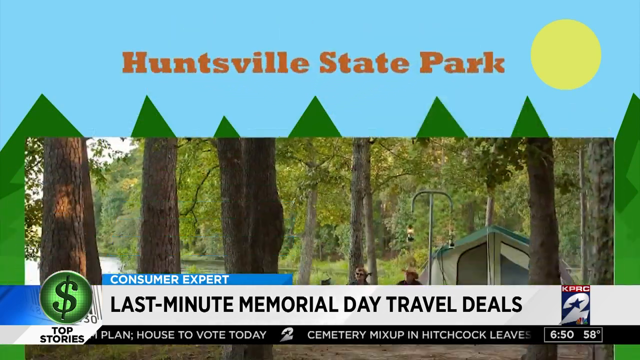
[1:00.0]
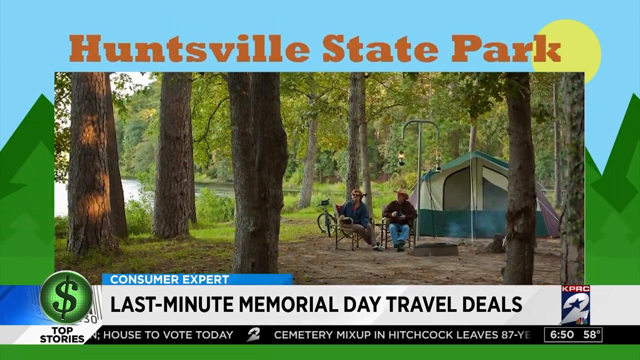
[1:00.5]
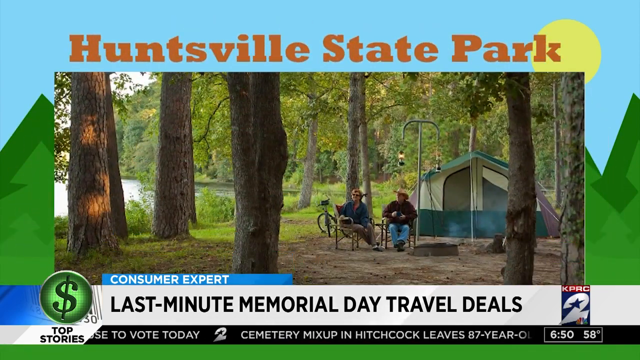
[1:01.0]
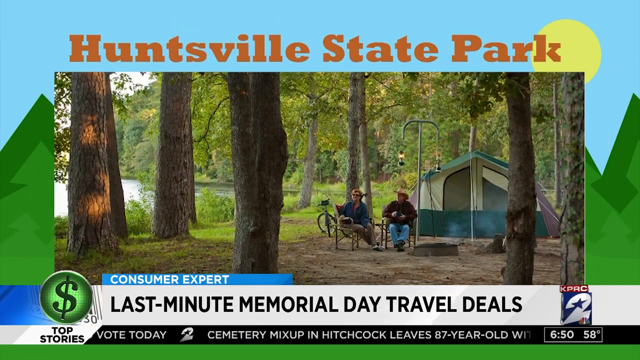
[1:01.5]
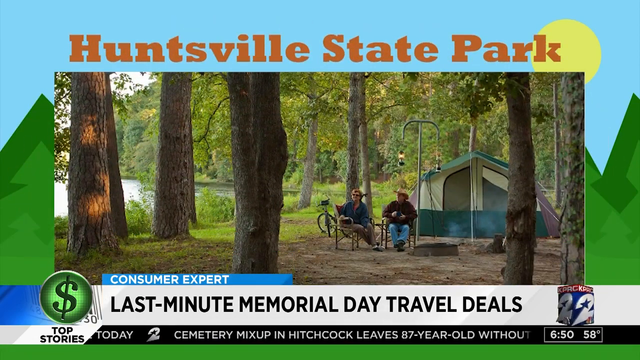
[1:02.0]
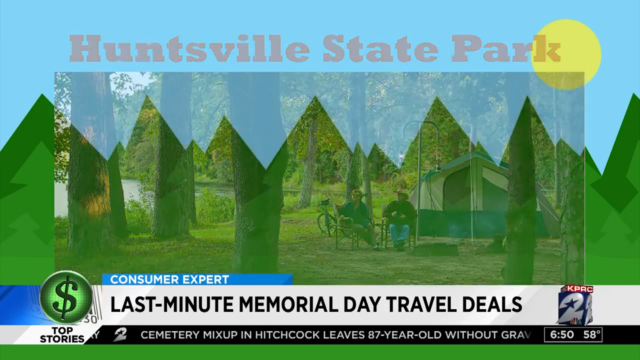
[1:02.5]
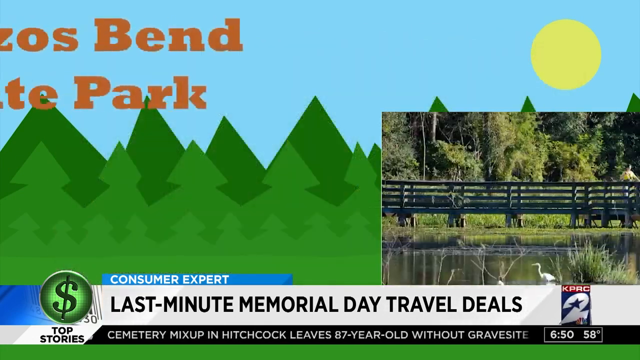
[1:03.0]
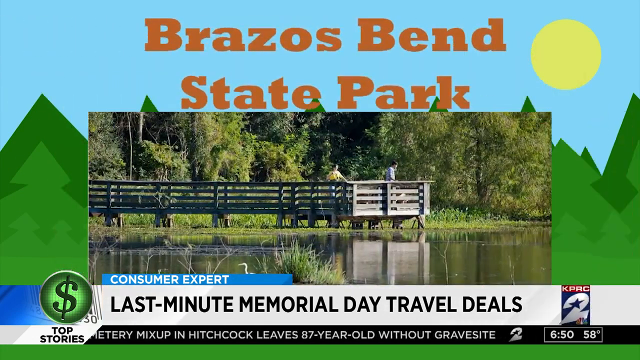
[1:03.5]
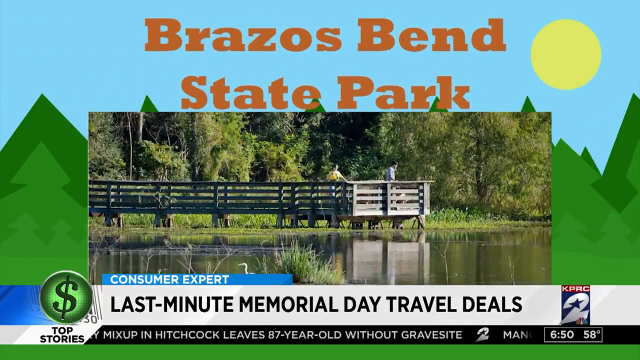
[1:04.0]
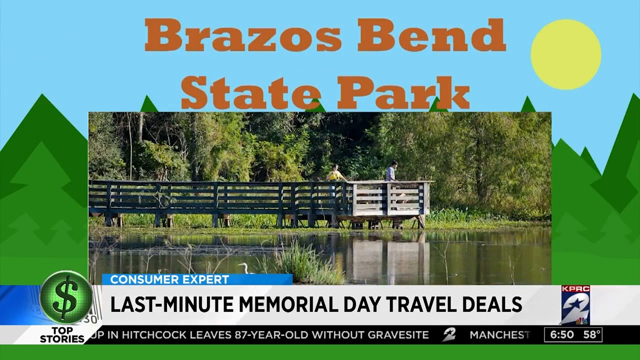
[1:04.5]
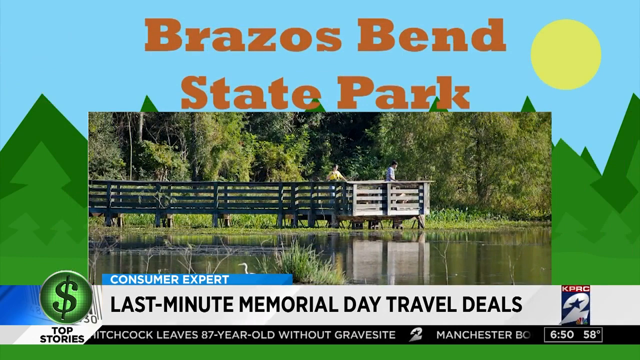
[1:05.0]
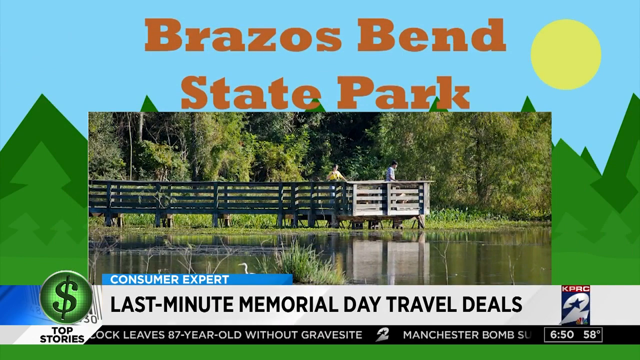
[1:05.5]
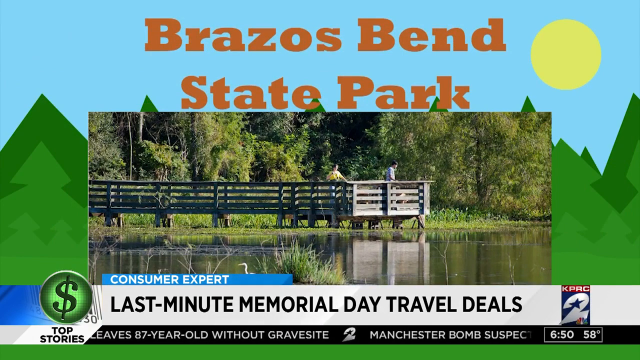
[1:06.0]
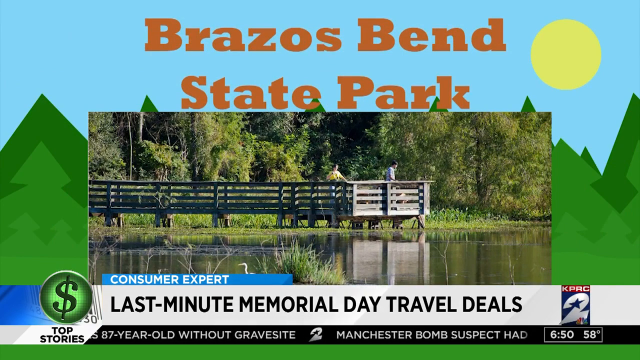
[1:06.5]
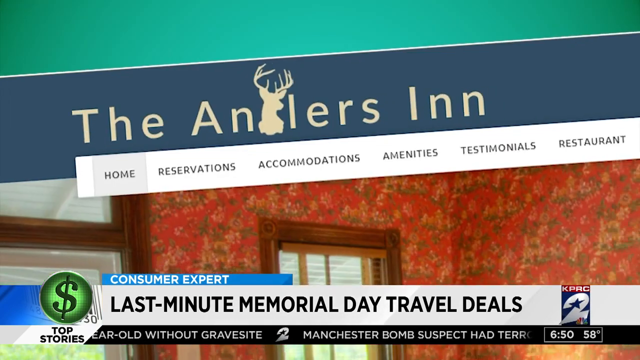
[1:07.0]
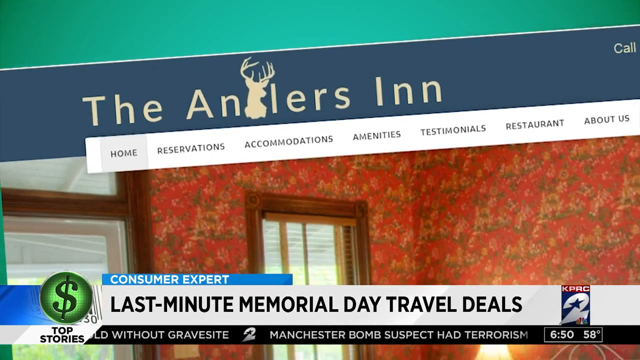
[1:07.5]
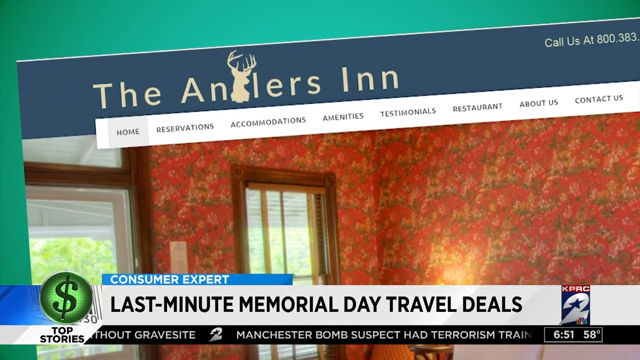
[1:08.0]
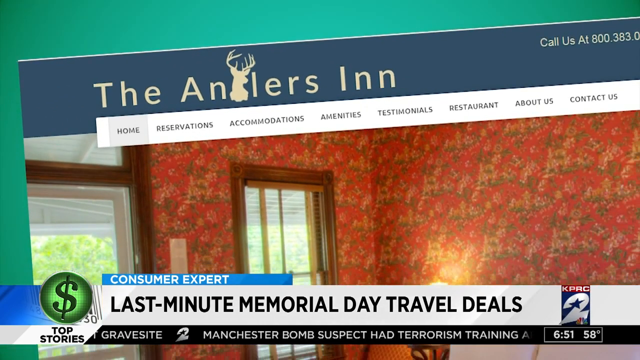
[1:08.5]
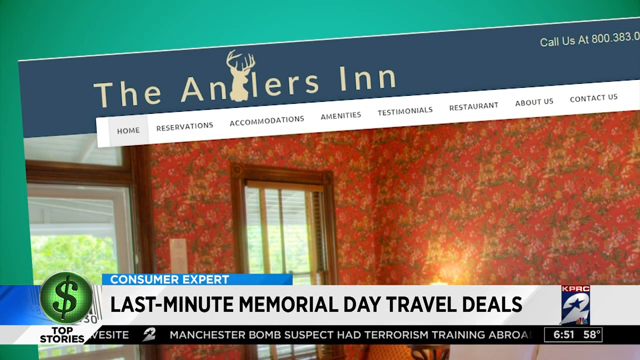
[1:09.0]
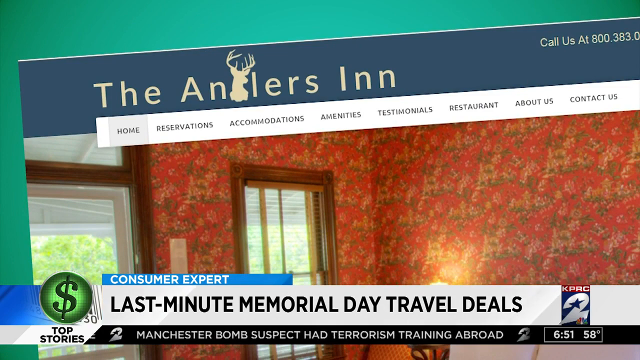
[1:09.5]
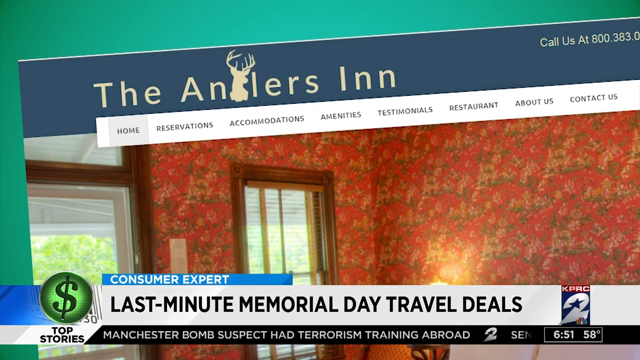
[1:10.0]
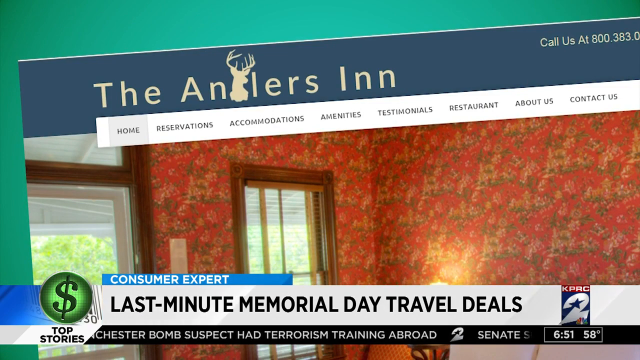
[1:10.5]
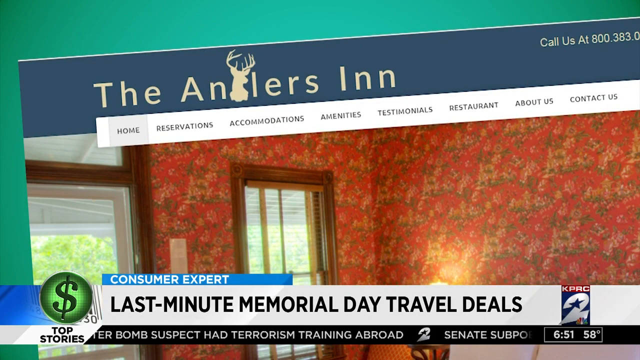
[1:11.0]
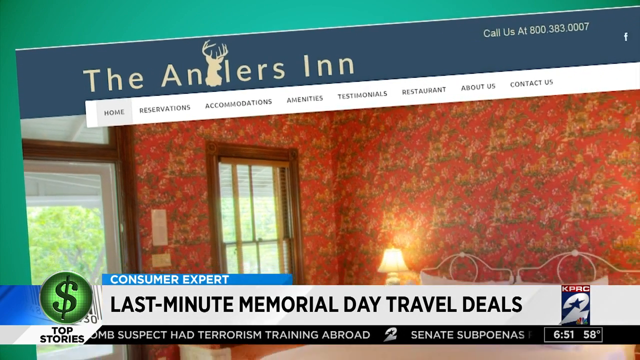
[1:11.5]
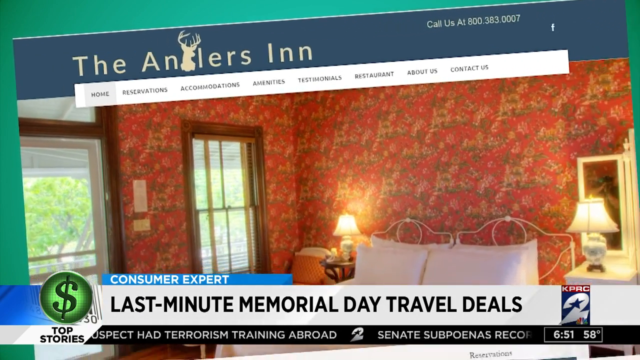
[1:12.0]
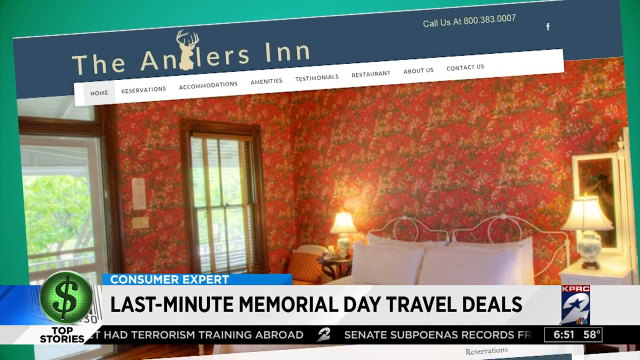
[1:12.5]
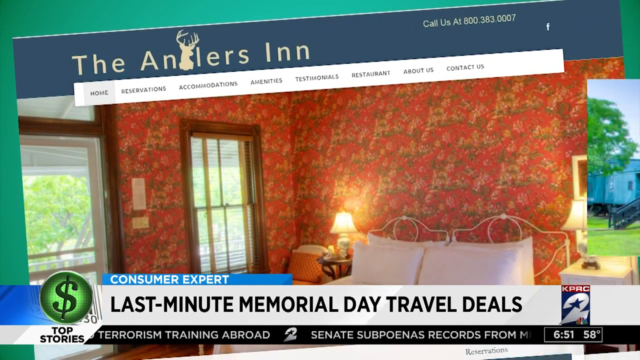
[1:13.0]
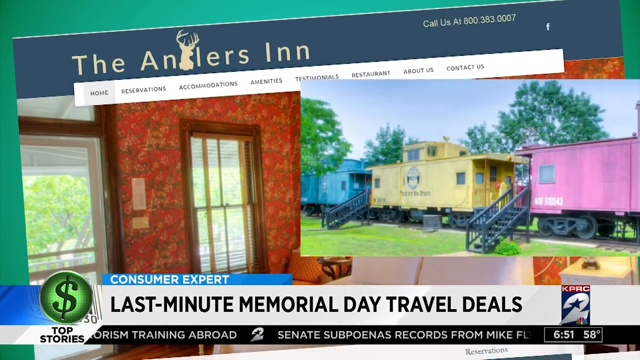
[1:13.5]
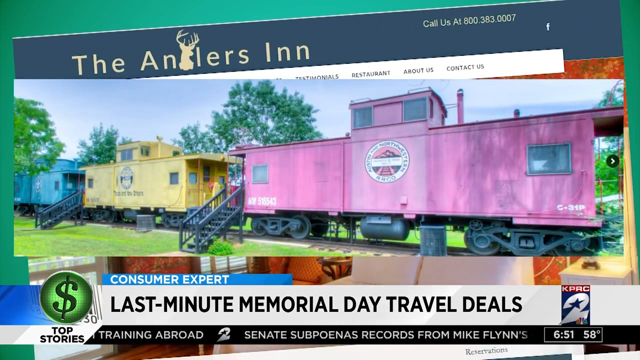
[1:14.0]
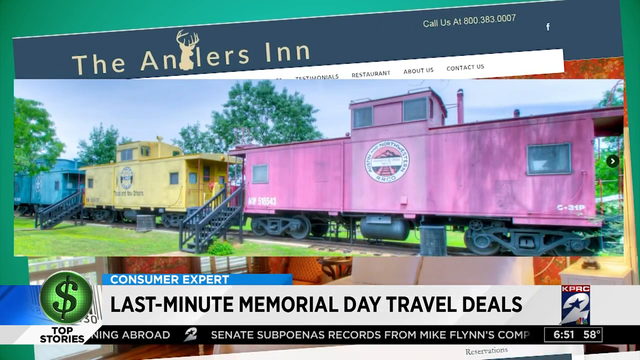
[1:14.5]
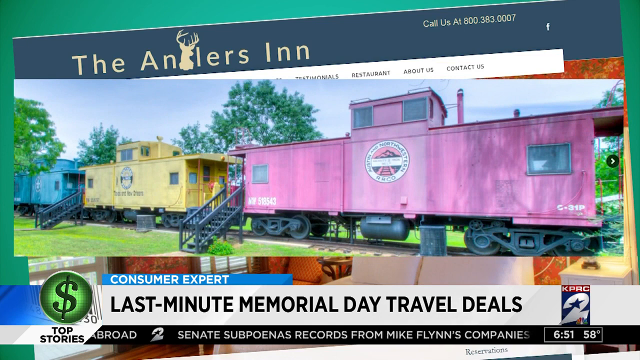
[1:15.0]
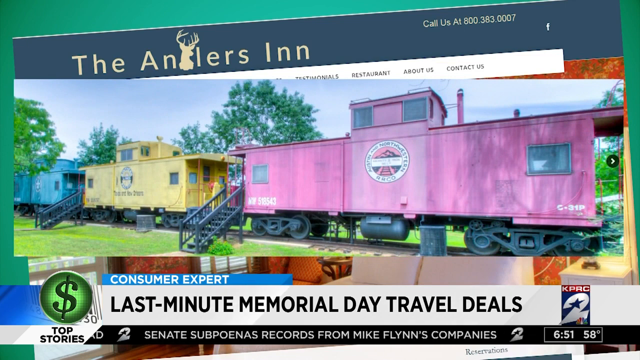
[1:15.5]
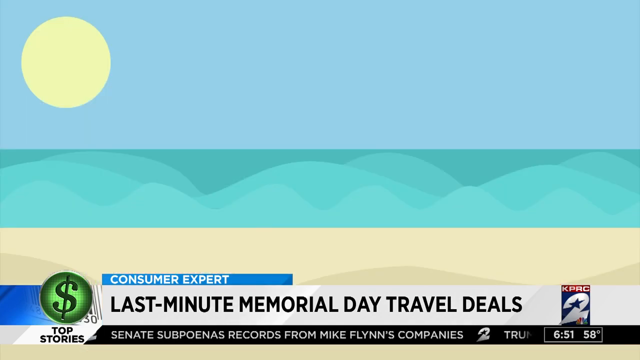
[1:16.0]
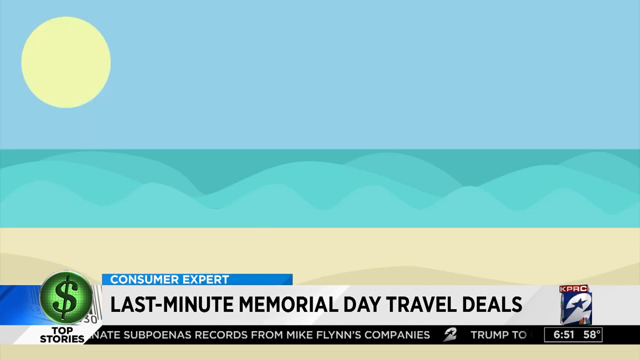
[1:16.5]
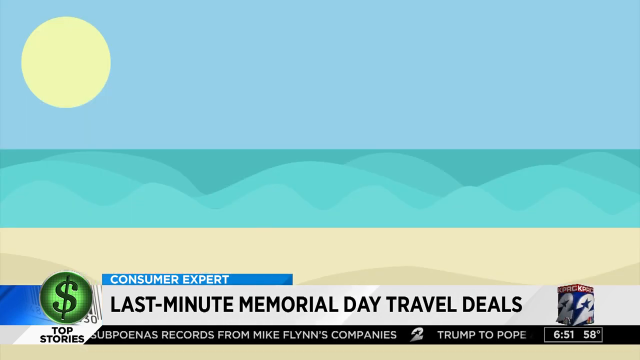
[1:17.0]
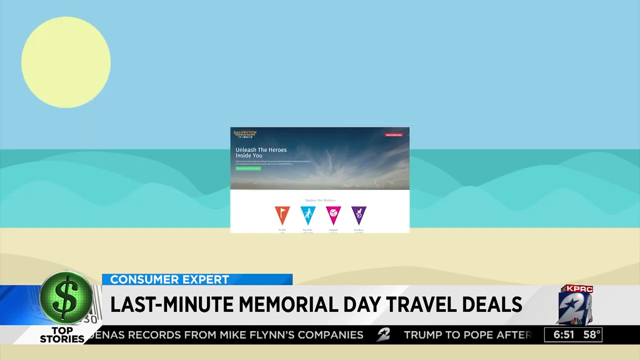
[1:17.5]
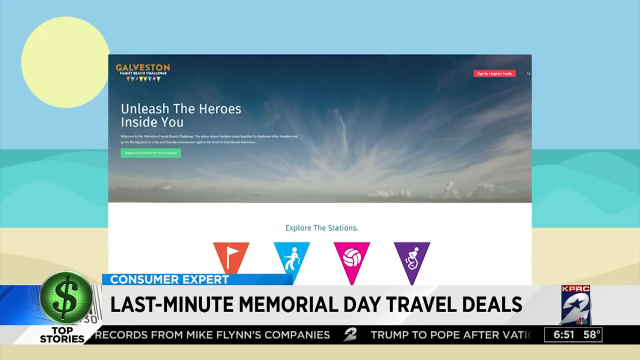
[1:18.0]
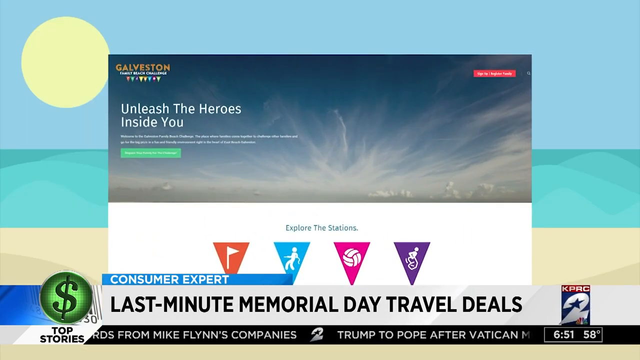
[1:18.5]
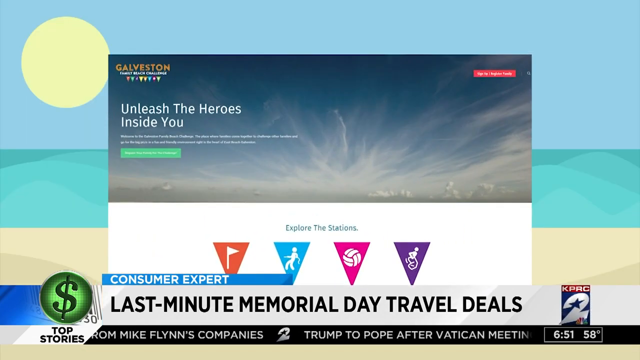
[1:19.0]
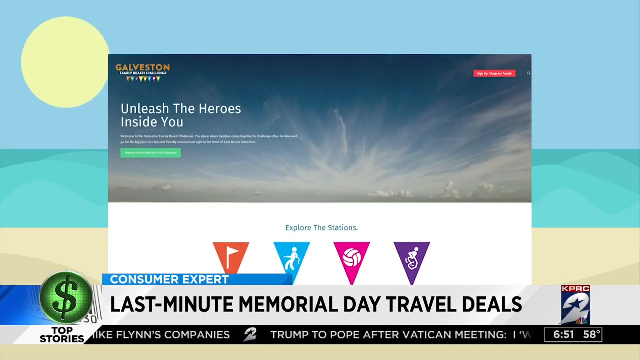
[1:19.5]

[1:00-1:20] The news report continues. At the start, text at the top reads "Huntsville State Park," over a picture of a couple of people lounging and enjoying their time at the park. A tent of a sort of turquoise color is right behind them, so they are apparently camping. A man and a woman are relaxing, sitting on a chair and looking at a lake to the left of them. Another picture swings by with "Brazos Bend State Park" at the top, showing two more people, this time standing at a sort of dock area and looking at the lake around them. Then a picture of the Engler's Inn, another hotel, appears, along with a picture of connected, multicolored trains: one pink, one yellow, and one blue. After that, the video cuts to something else.